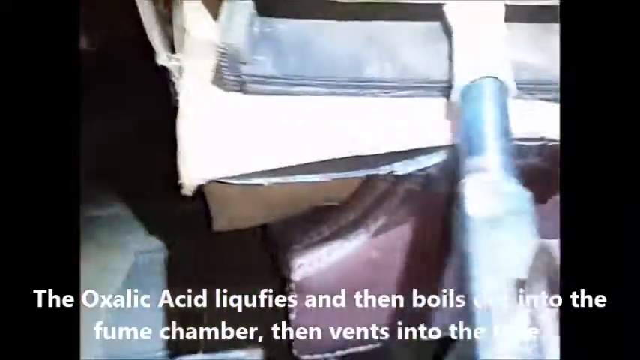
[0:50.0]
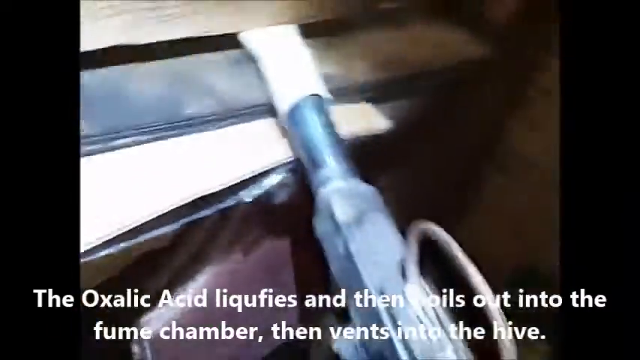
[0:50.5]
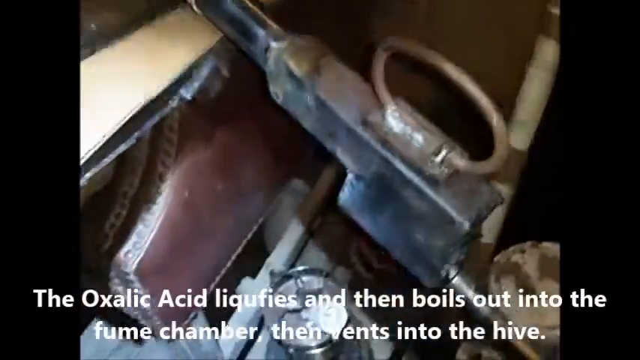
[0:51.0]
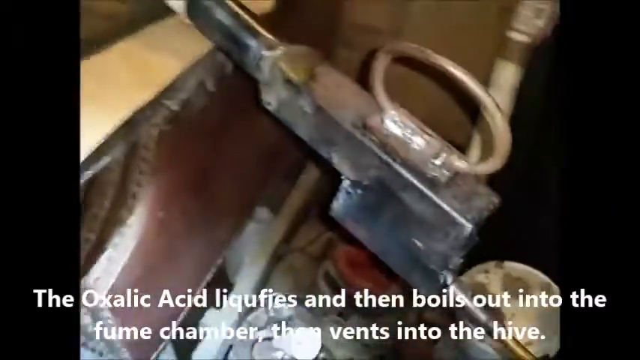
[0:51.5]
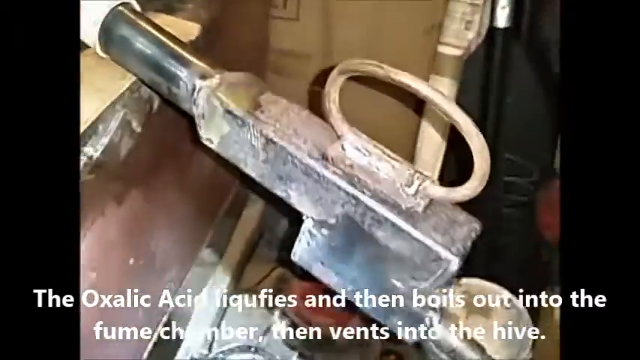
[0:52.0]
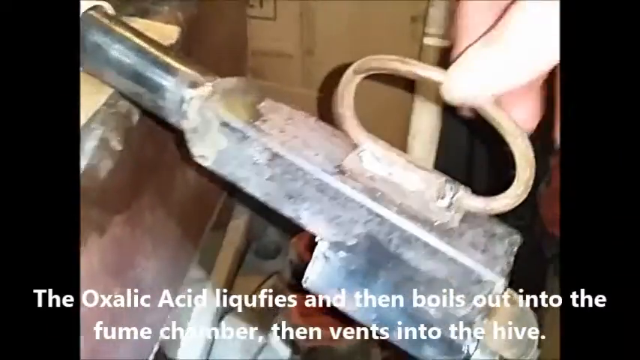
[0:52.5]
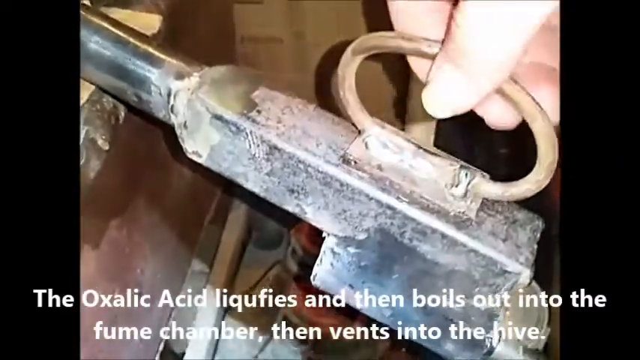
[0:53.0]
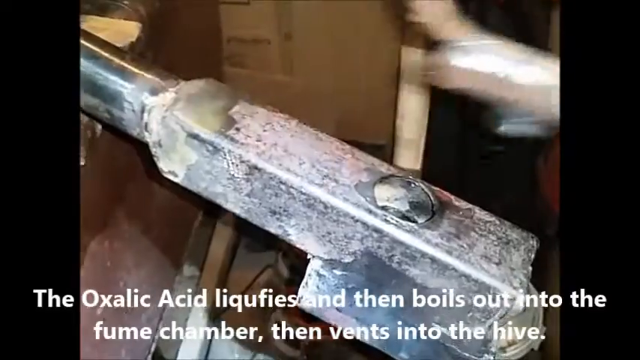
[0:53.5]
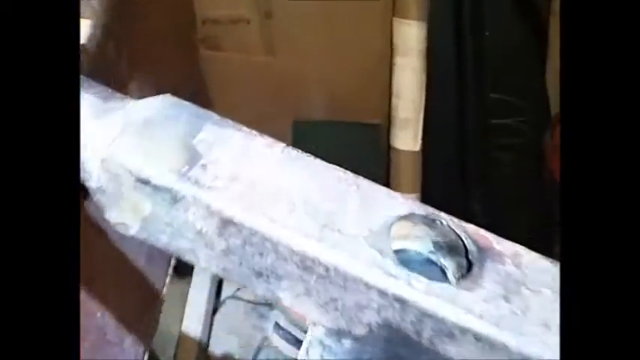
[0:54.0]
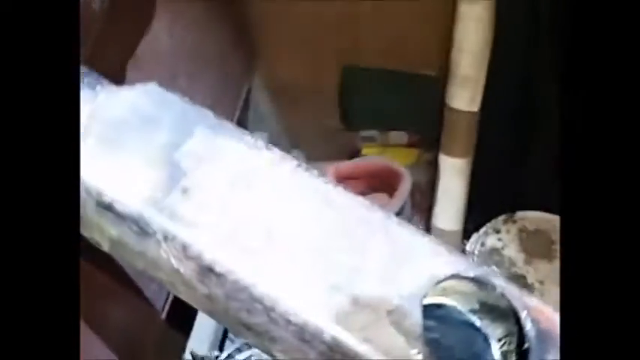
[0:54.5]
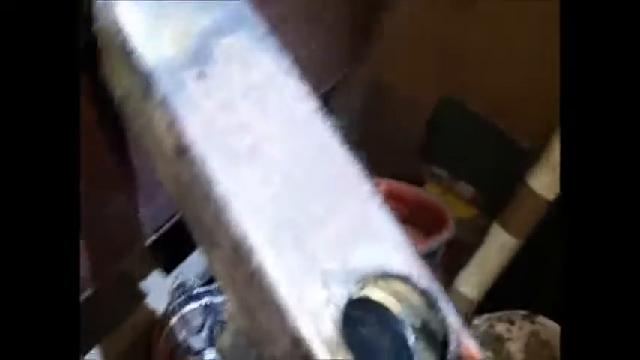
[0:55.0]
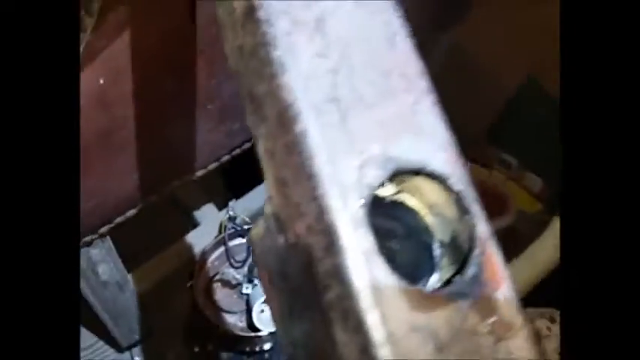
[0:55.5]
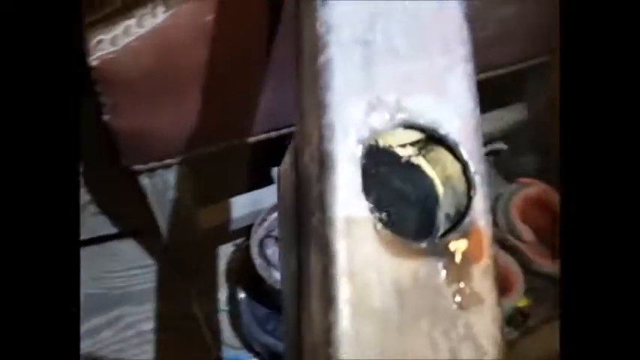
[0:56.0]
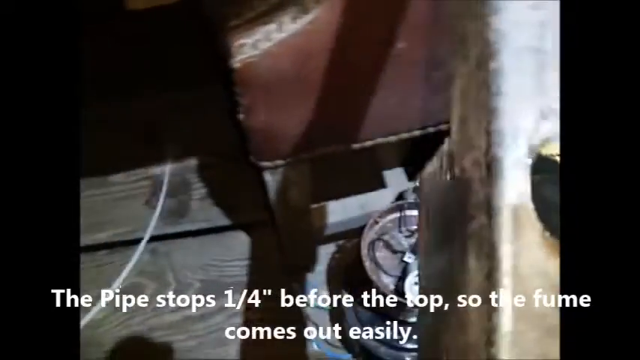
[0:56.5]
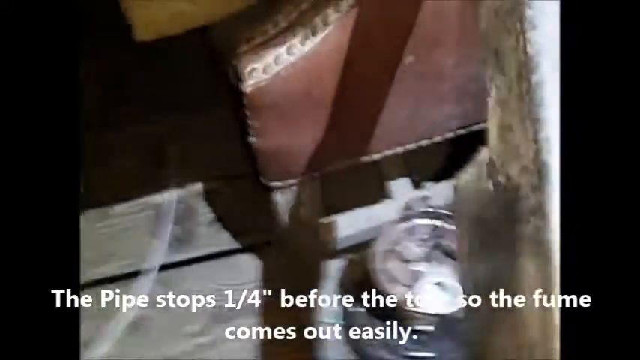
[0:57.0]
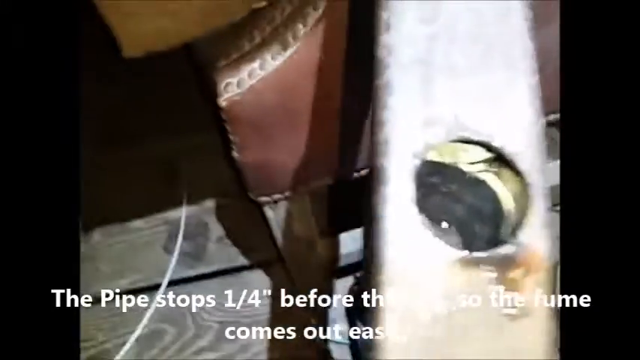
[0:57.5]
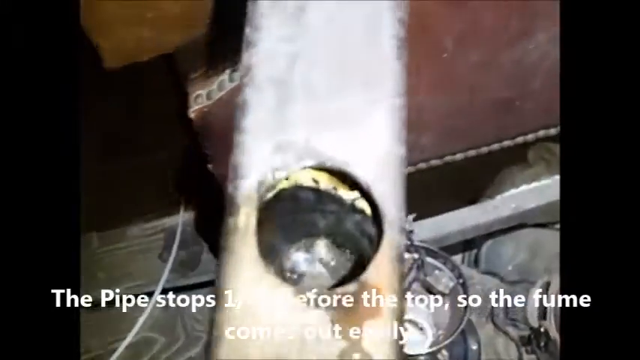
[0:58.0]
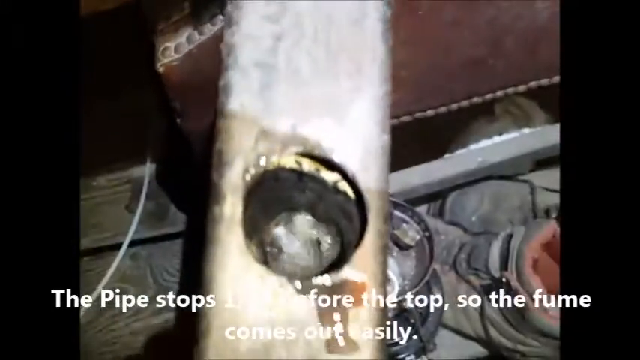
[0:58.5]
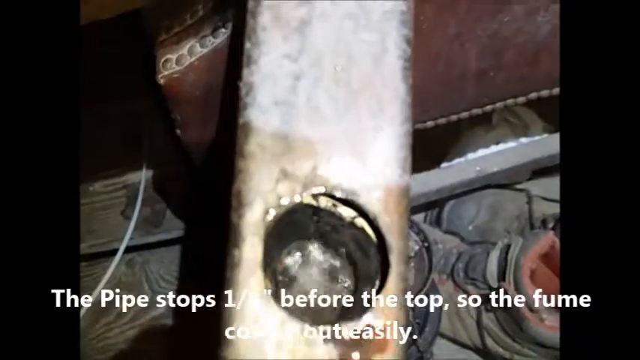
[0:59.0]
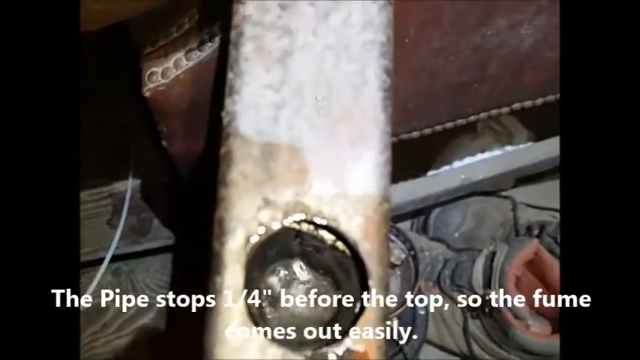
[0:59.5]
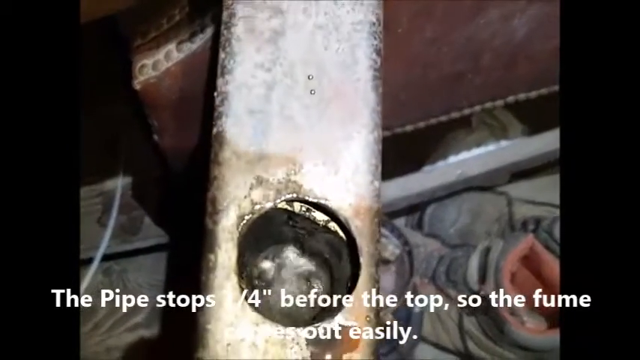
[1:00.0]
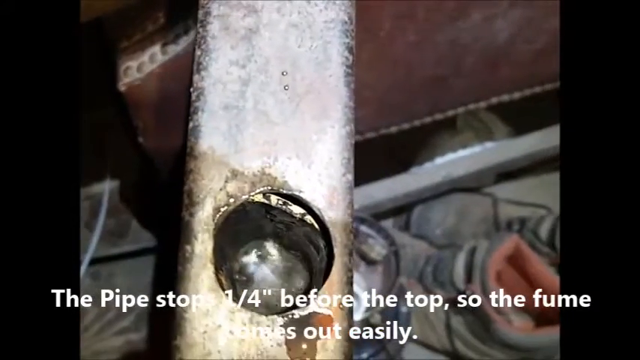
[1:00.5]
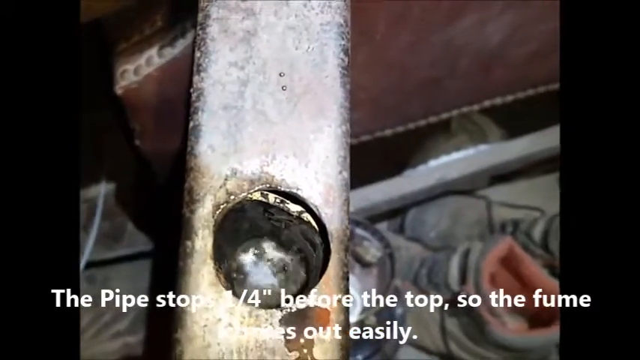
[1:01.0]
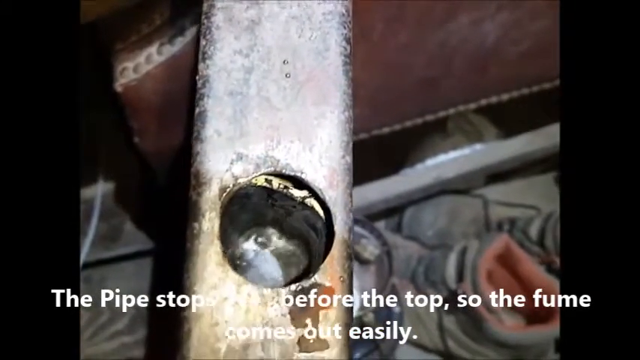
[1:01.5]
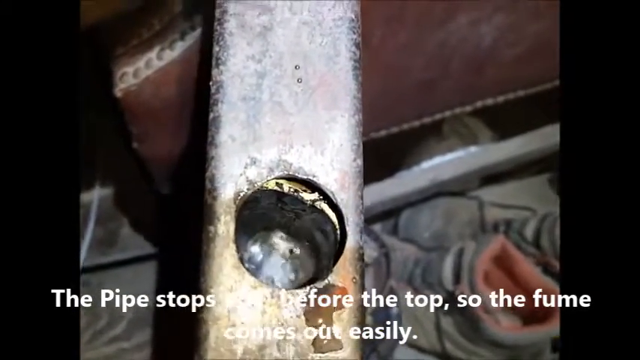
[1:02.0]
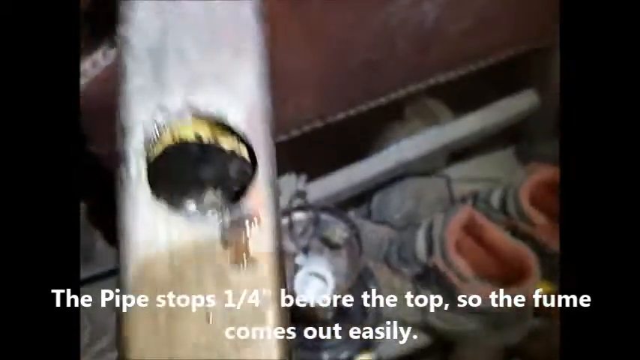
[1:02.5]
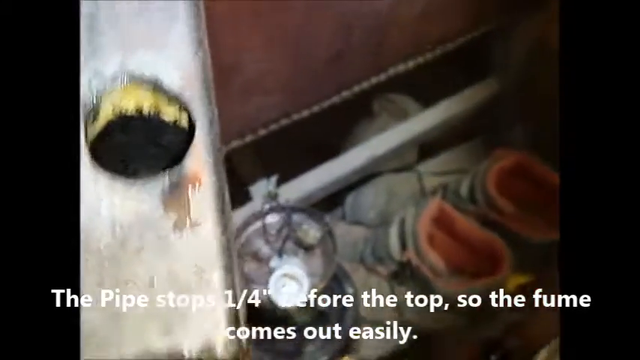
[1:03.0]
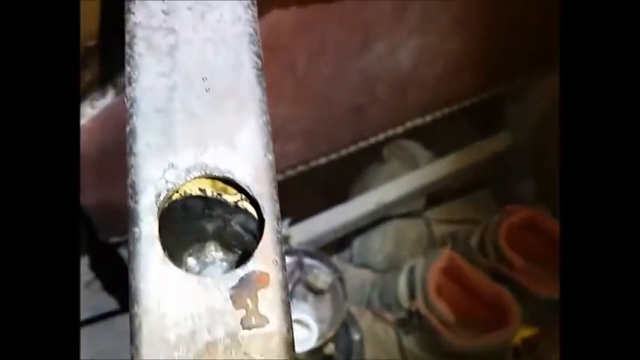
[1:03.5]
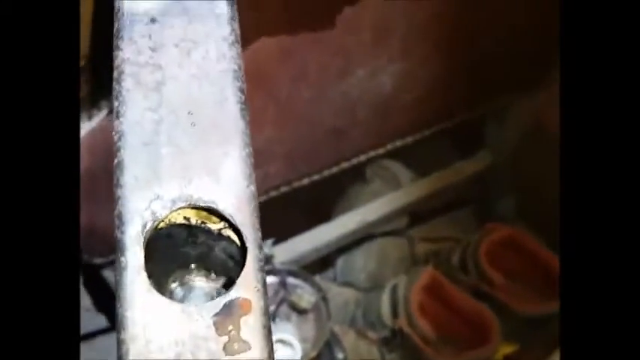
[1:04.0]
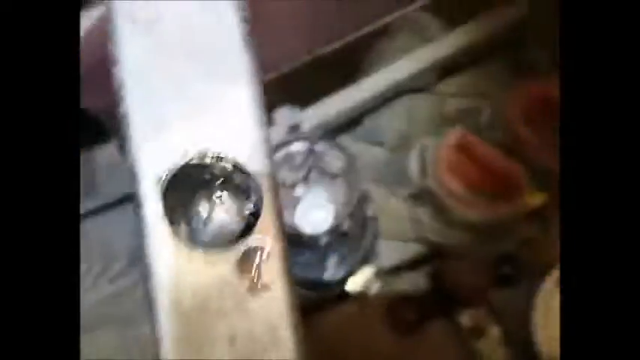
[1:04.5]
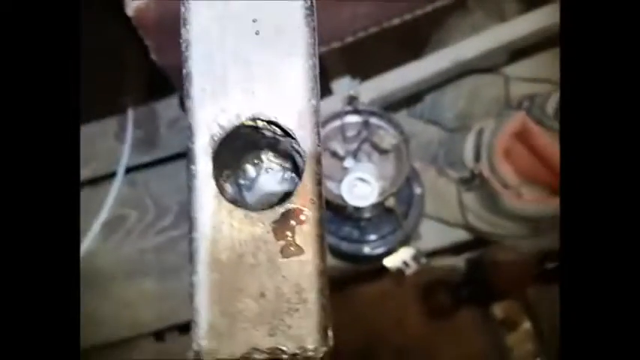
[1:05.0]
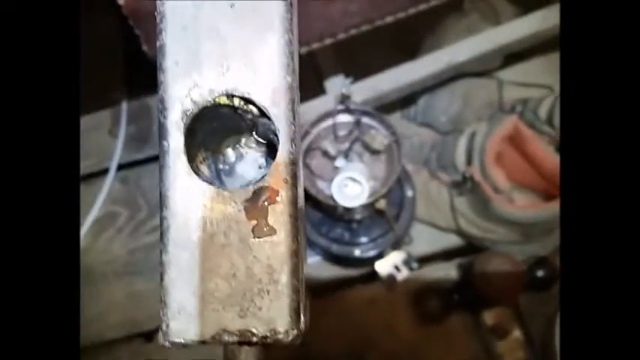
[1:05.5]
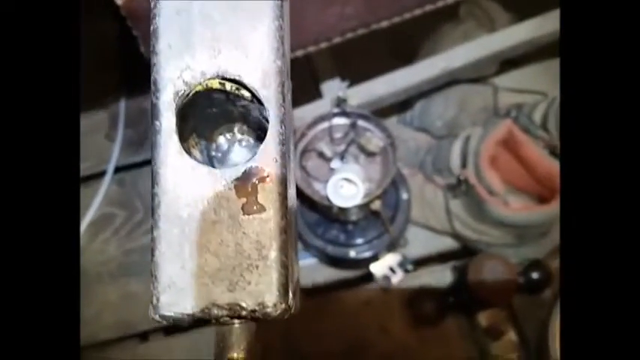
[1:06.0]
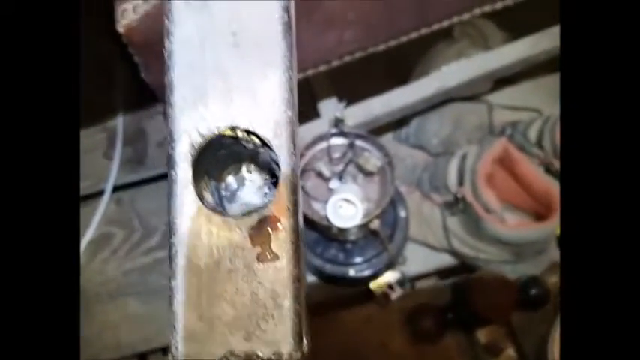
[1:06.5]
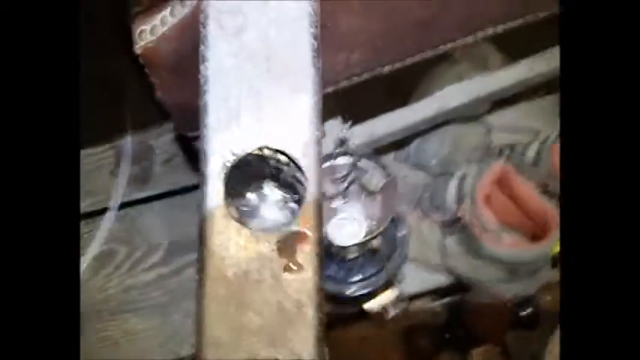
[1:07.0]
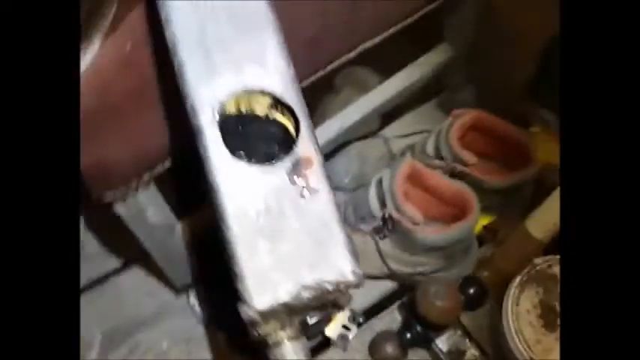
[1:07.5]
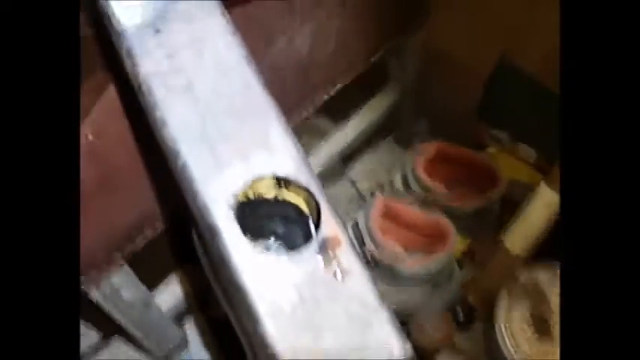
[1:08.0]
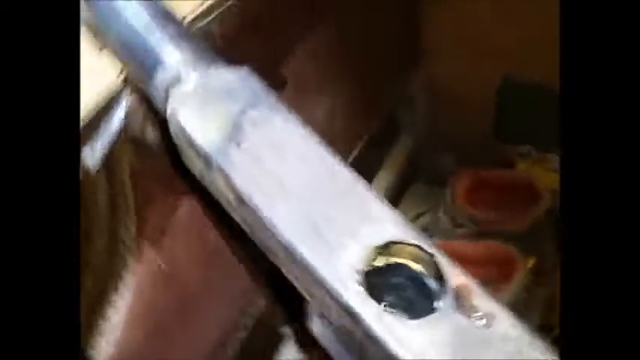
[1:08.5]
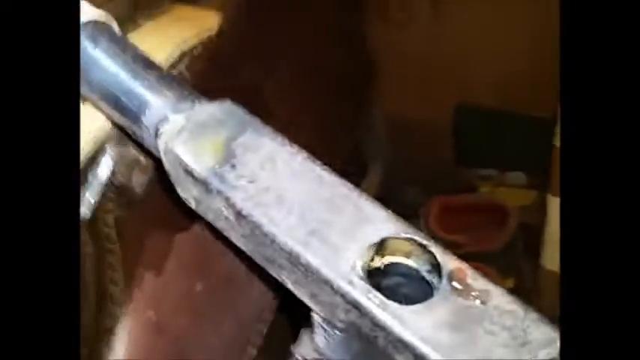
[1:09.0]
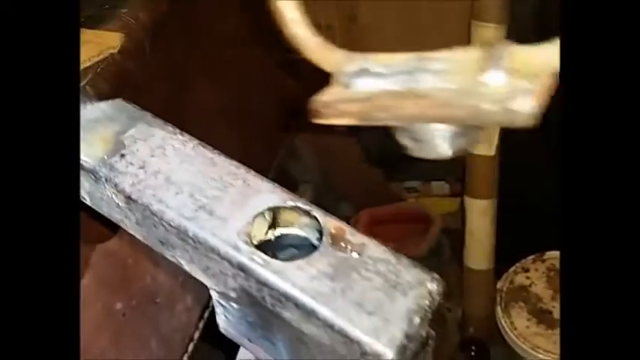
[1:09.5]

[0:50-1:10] A side view shows the pipe going into the box. Someone's hand comes into frame and picks a piece off the top of the pipe. The camera pans down into the hole, where liquid appears to be moving through the pipe. In the bottom right-hand corner of the screen, below this pipe, is a pair of shoes that are orange inside and look brownish on the outside. Boards that the contraption is on are visible. At the end, the person puts the cap back on the contraption. The subtitles read "the oxalic acid liquefies and then boils out into hive. The fume chamber then vents into the hive. The pipe stops a quarter before the top so the fume comes out easily."